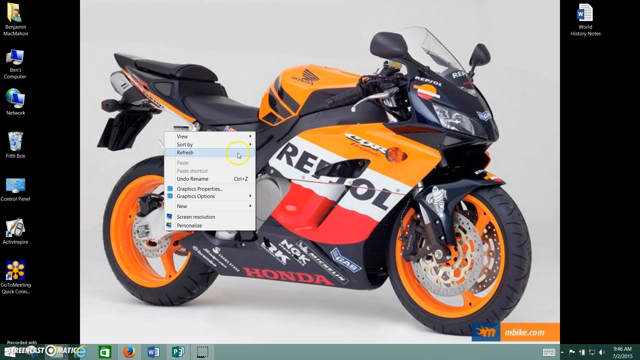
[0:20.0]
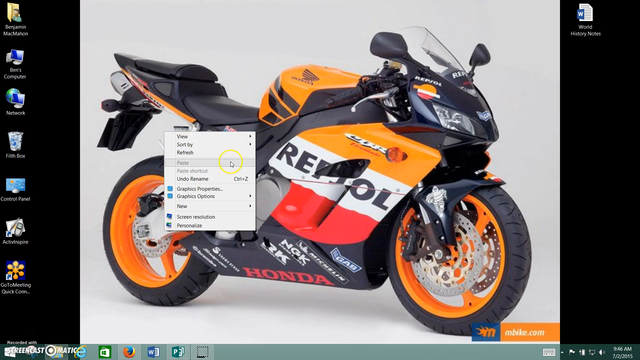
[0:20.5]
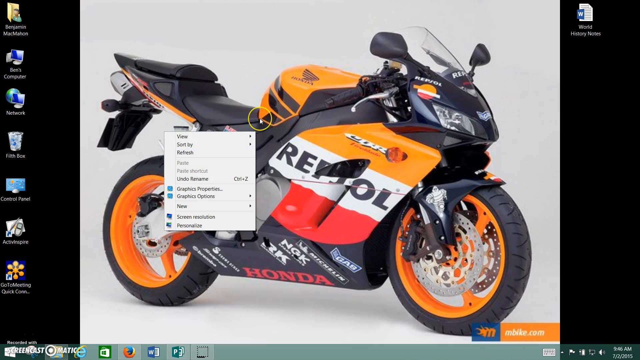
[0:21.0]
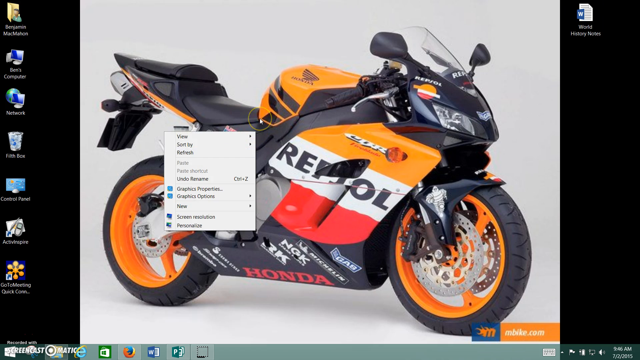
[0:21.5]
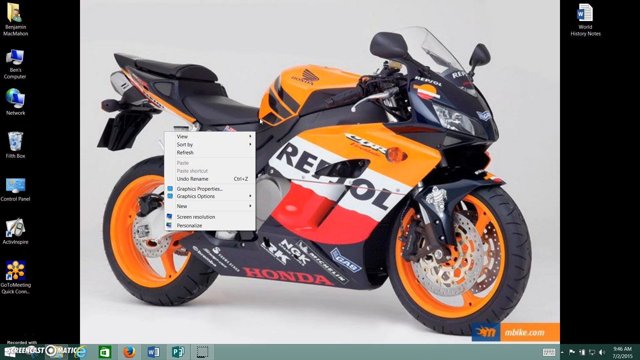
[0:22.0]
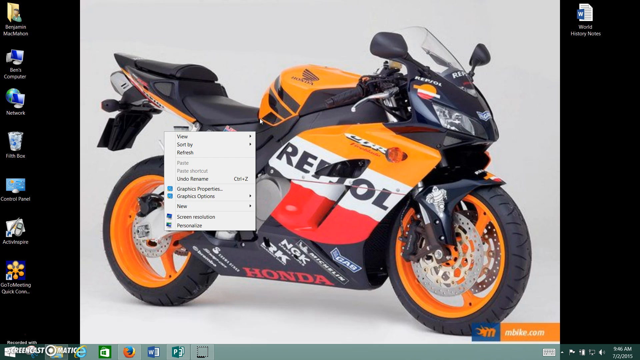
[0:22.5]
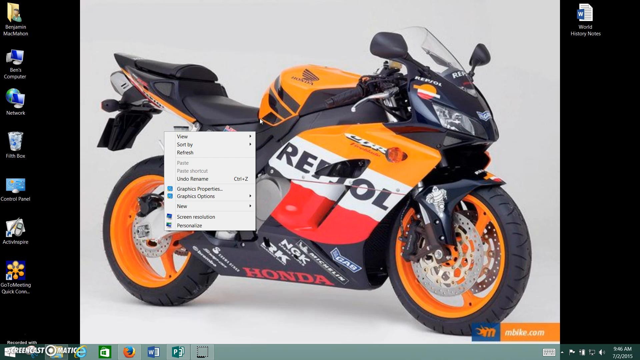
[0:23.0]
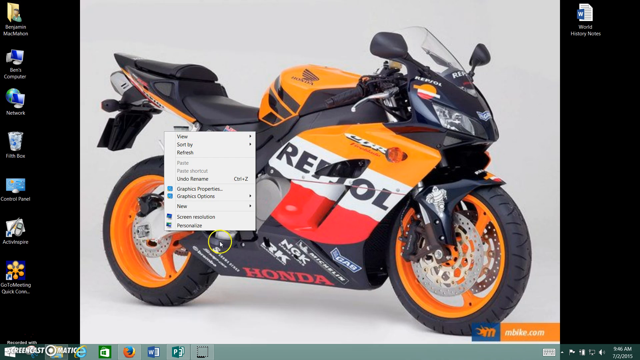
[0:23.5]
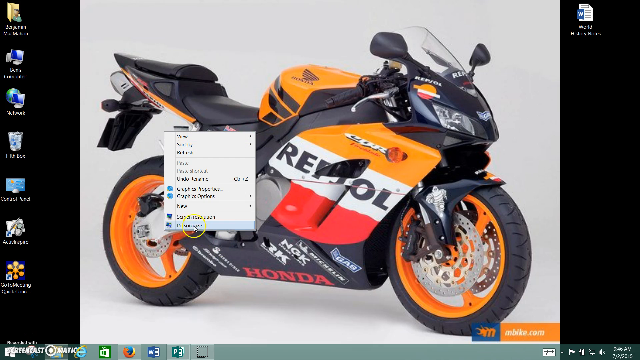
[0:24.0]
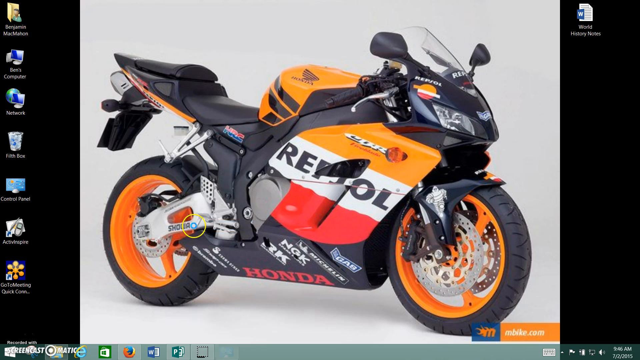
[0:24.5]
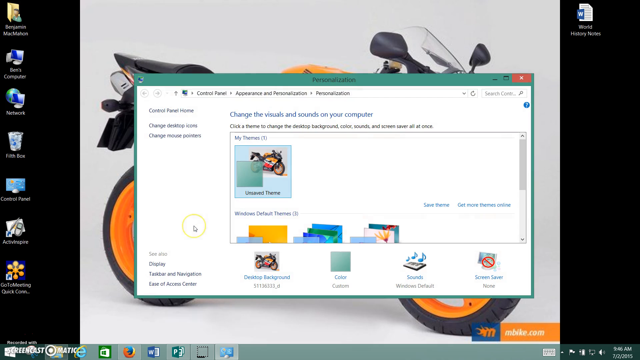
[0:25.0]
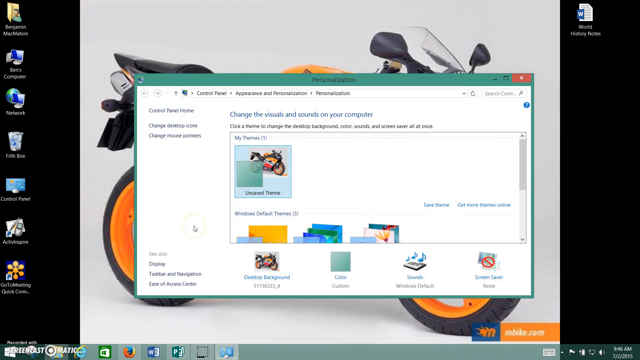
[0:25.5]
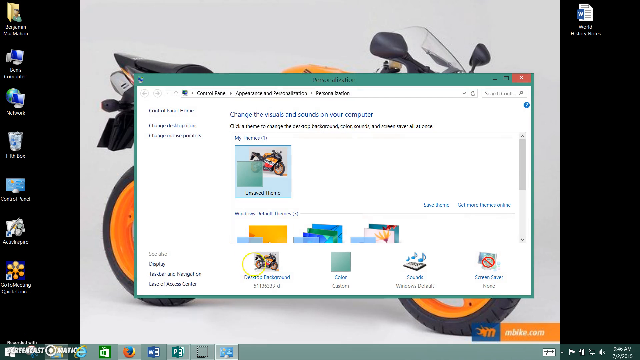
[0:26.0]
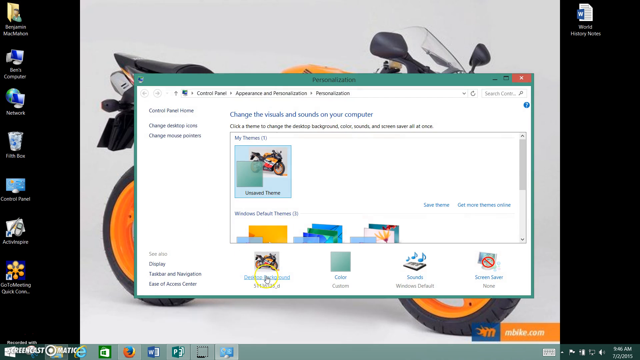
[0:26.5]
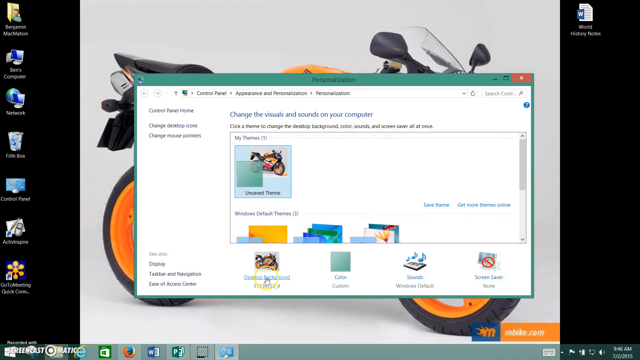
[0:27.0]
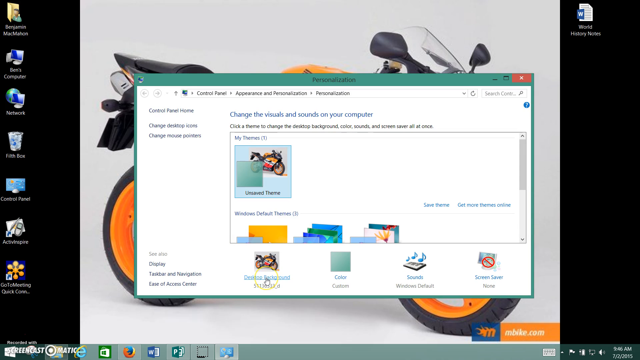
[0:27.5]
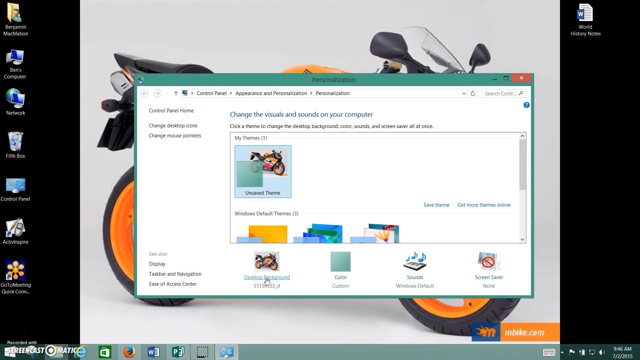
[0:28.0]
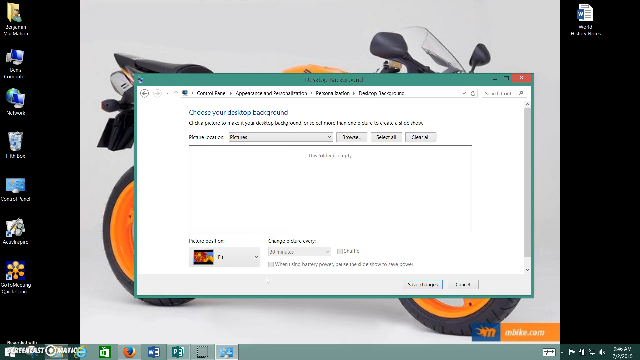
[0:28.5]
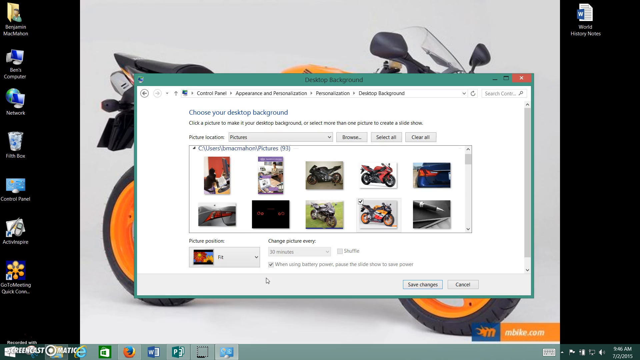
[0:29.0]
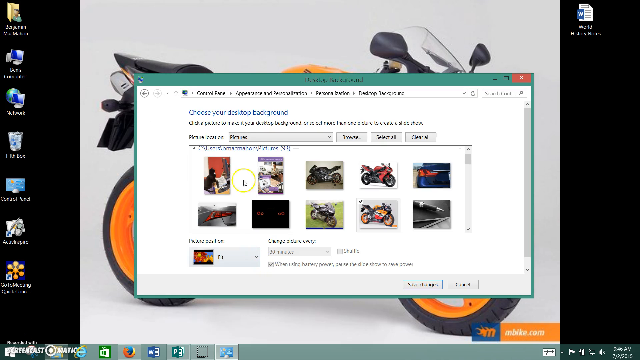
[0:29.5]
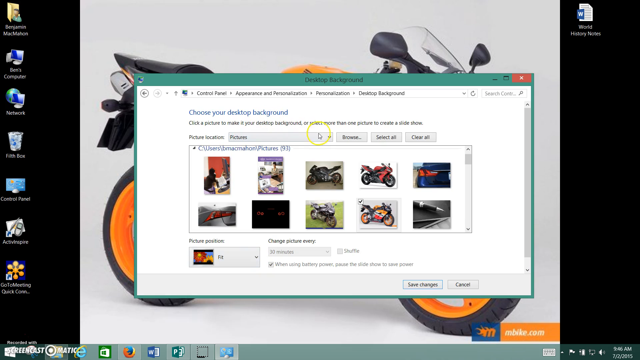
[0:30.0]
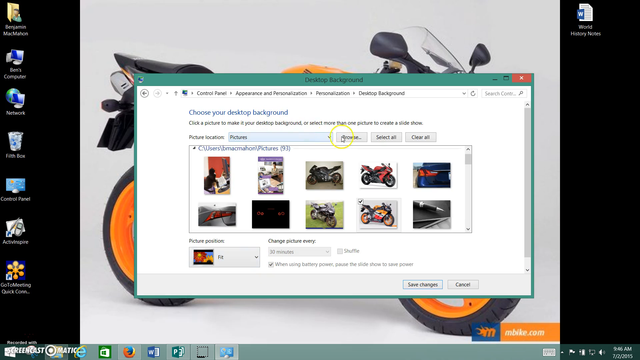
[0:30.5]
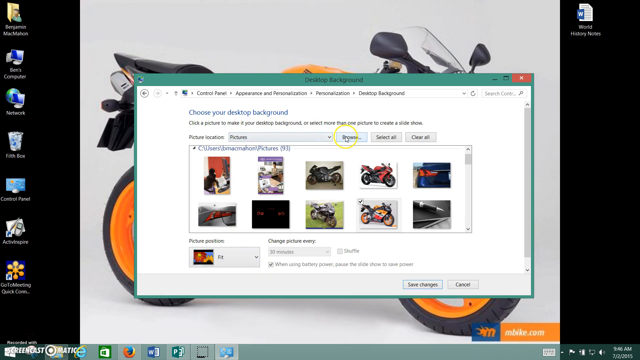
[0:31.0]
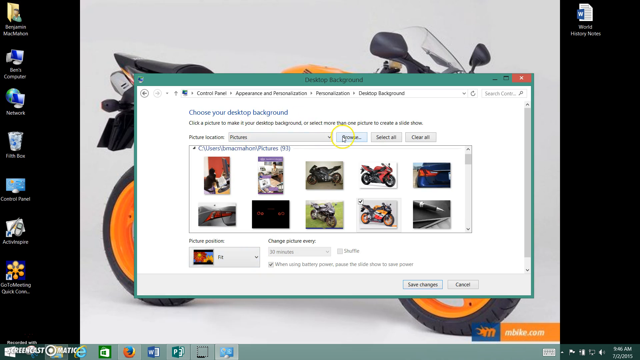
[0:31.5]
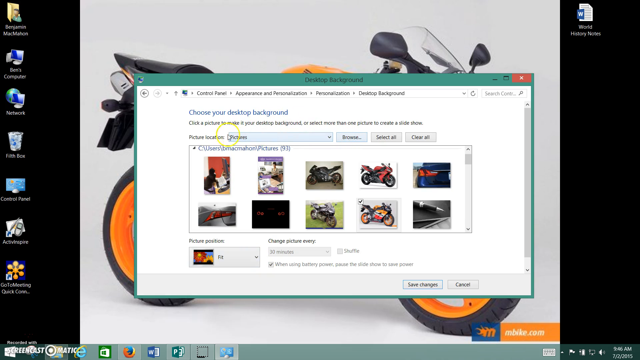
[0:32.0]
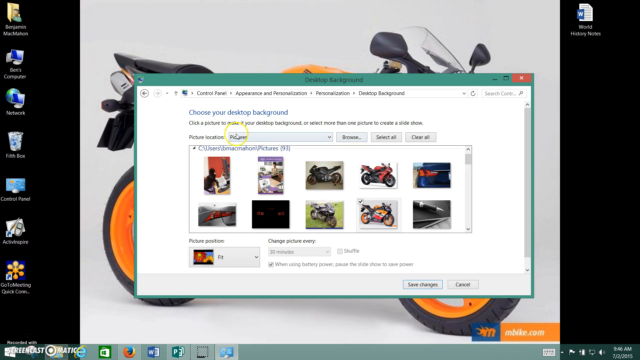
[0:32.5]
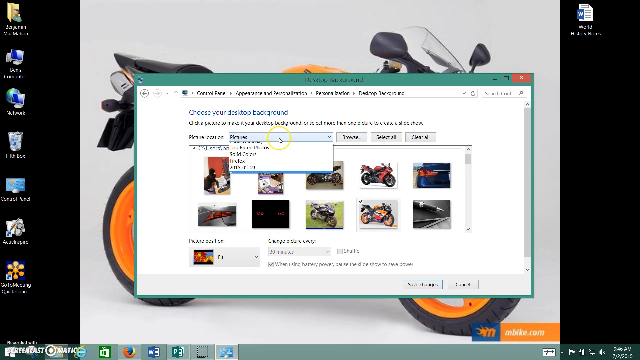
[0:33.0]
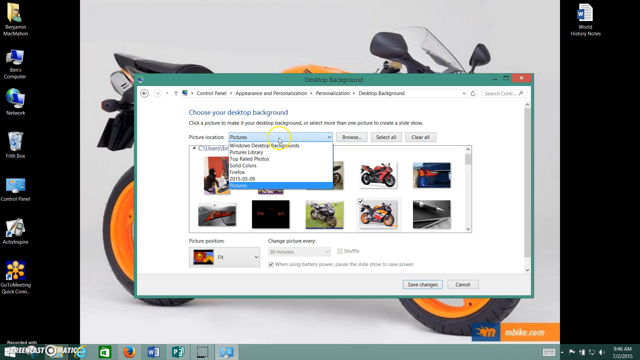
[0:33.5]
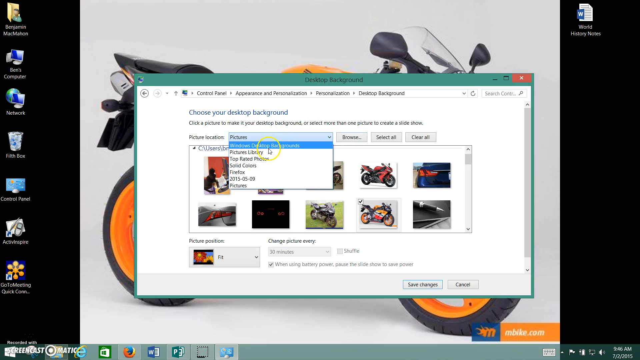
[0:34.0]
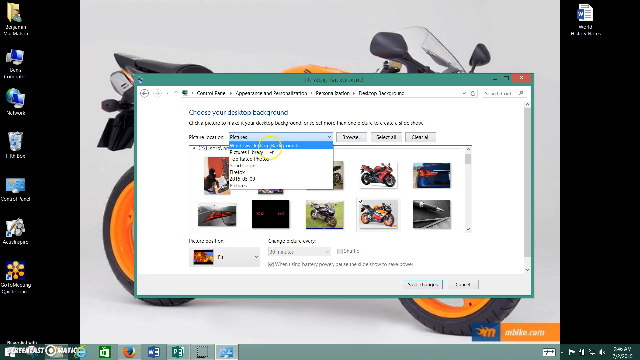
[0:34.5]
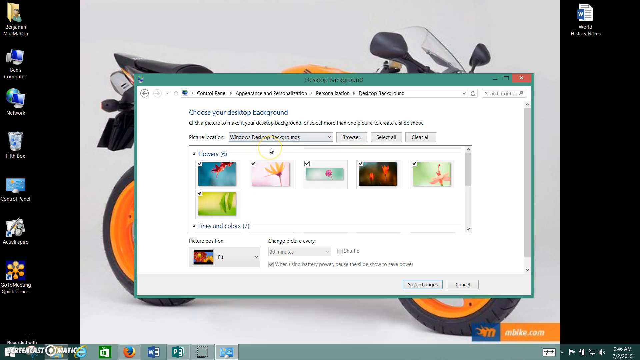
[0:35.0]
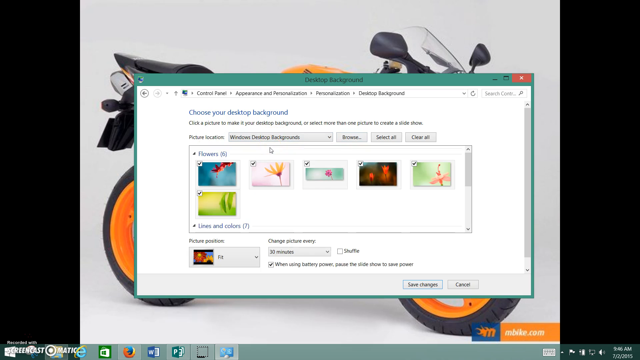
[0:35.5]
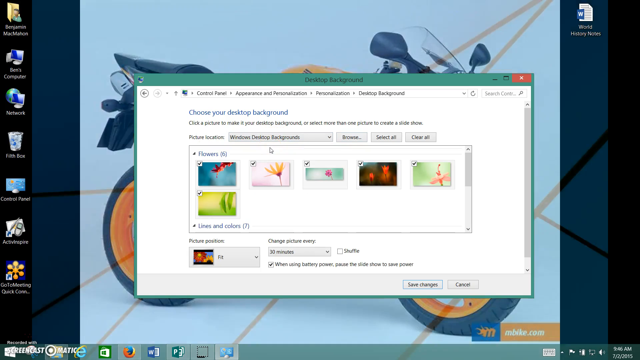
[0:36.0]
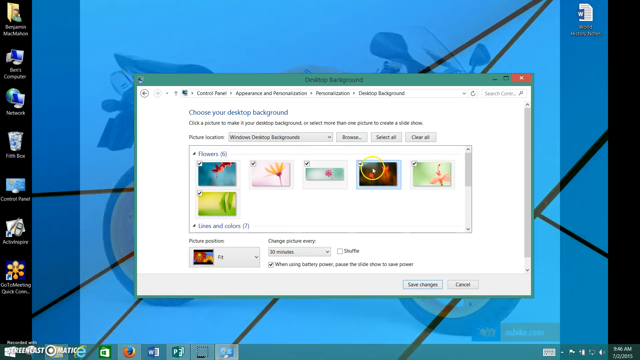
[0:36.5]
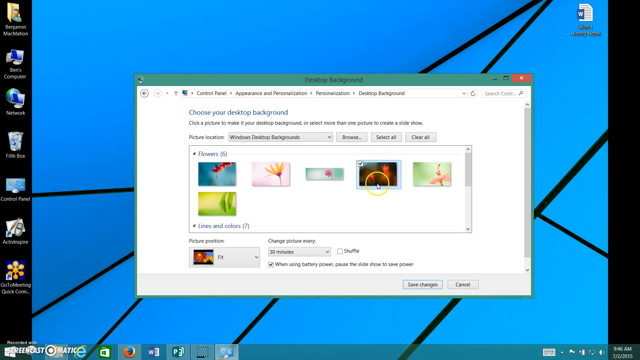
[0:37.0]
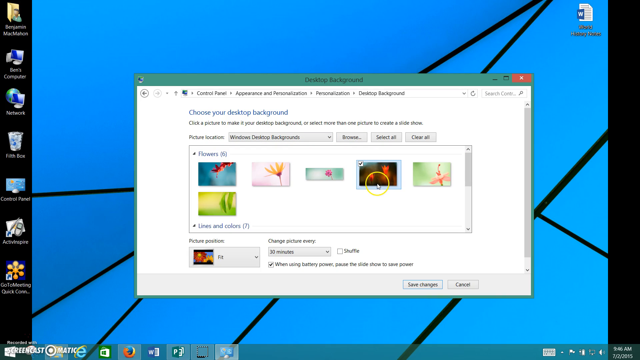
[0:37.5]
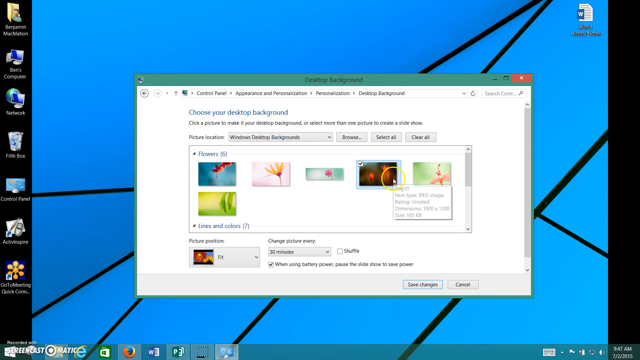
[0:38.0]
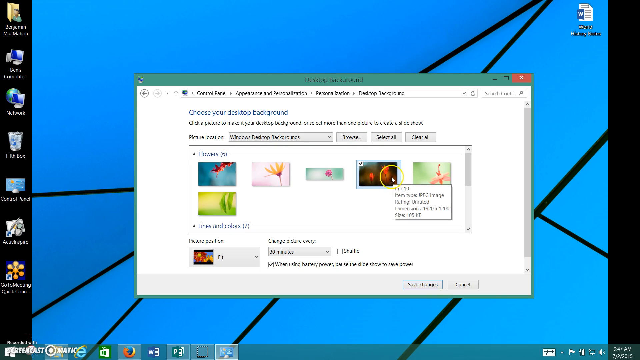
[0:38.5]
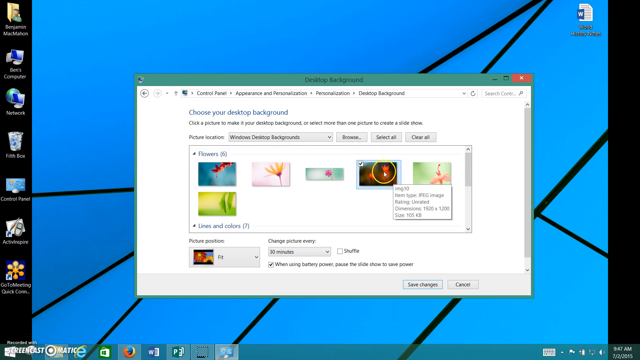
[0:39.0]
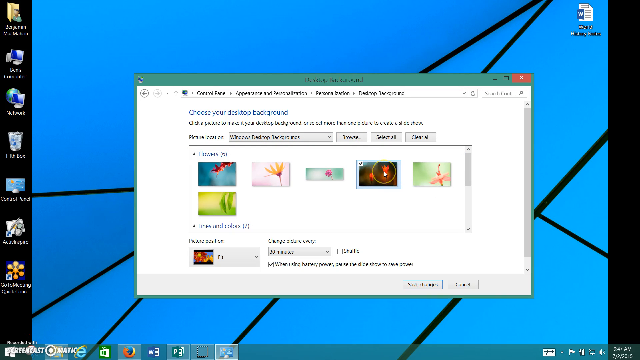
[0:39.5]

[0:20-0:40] On a Windows computer desktop, the wallpaper is an image of a black Honda motorcycle with orange, white and red stripes. Its black tires have orange hubcaps and gears, and the word "Repsol" is written on the motorcycle. The desktop has icons for My Computer, Network, the Recycle Bin and the Control Panel, and a Word document is in the top right corner. The user has right-clicked the desktop, opening a menu with the options View, Sort By, Refresh, Paste, Paste Shortcut, Undo Rename, Graphics Properties, Graphics Options, New, Screen Resolution and Personalize. The user scrolls down the menu with the cursor and clicks Personalize, which brings up the Windows Personalization menu with options including desktop background, color, sounds and screensaver. The user moves the cursor to the desktop background option and clicks it, opening the desktop background menu, where default Windows photos or the user's own image can be chosen. The cursor moves to picture location, which is set to the My Pictures folder by default. The user opens a dropdown and changes it to the Windows Desktop Backgrounds folder, which shows a number of images provided by Windows, and clicks one of them, an image of two red flowers.